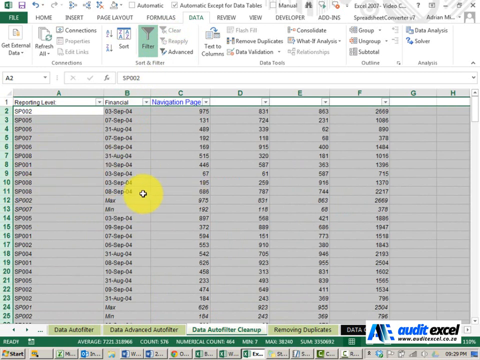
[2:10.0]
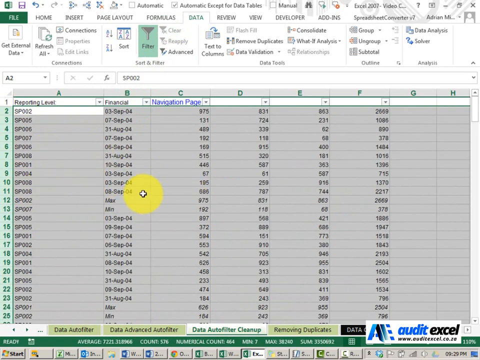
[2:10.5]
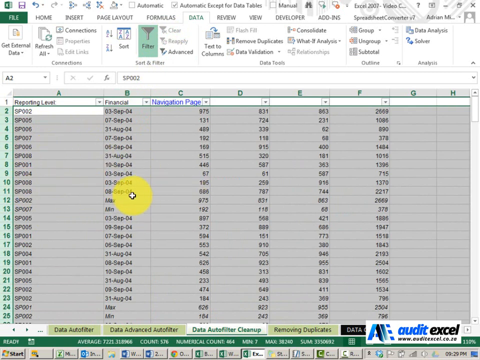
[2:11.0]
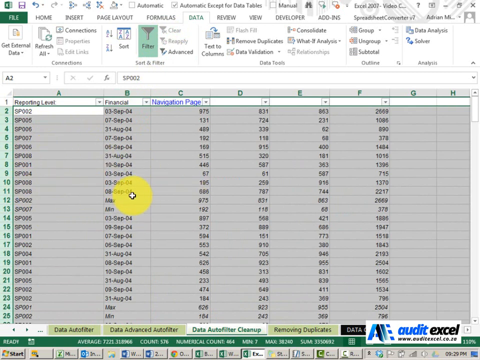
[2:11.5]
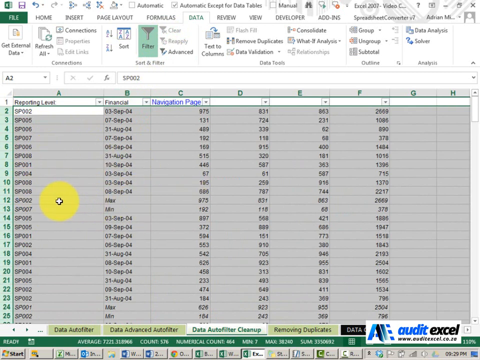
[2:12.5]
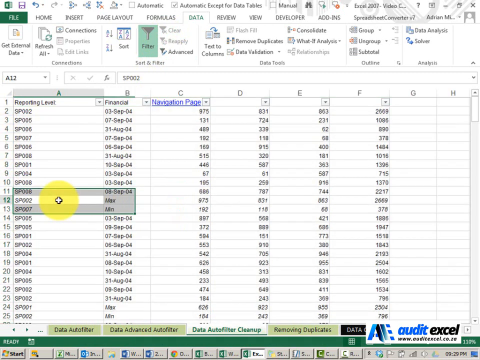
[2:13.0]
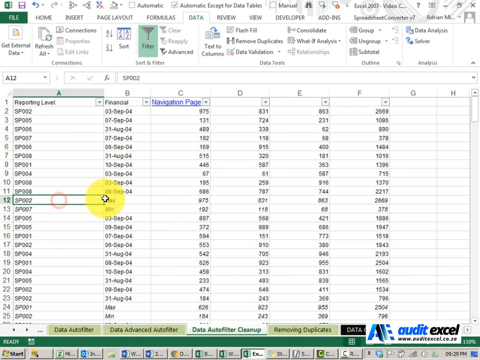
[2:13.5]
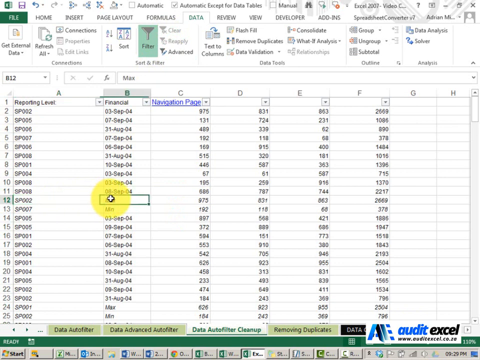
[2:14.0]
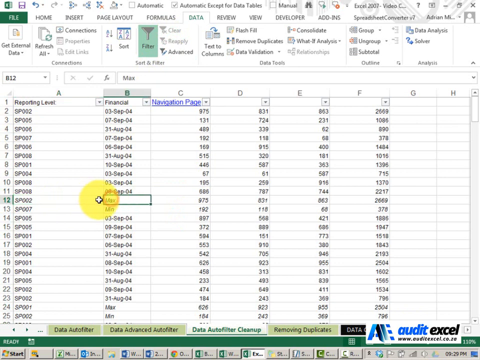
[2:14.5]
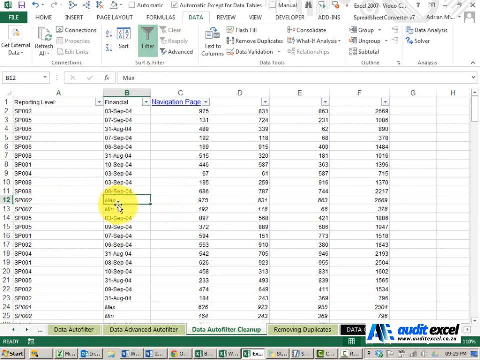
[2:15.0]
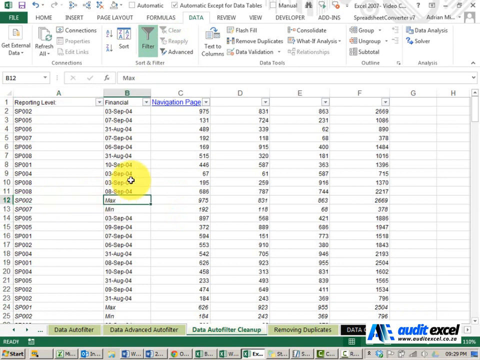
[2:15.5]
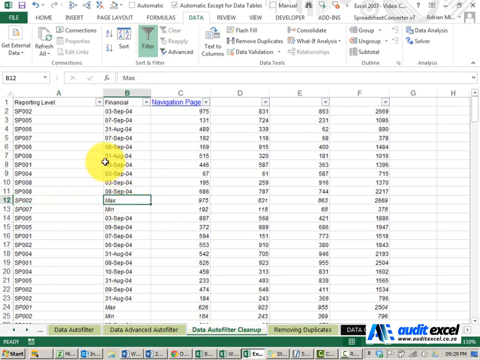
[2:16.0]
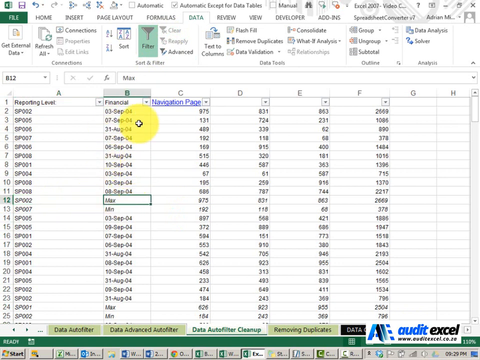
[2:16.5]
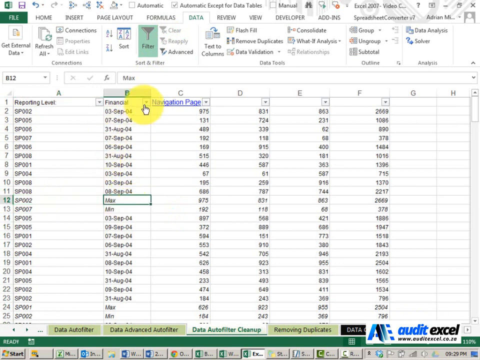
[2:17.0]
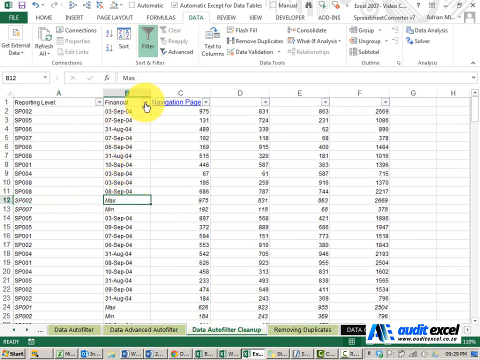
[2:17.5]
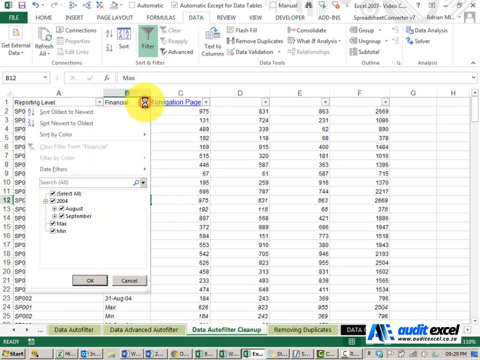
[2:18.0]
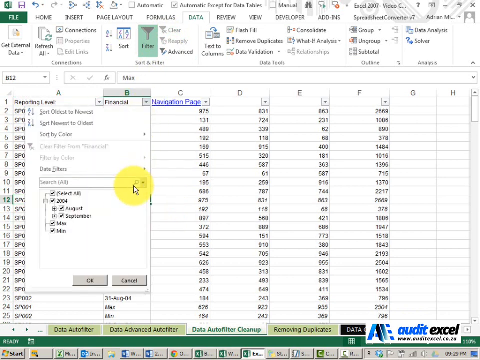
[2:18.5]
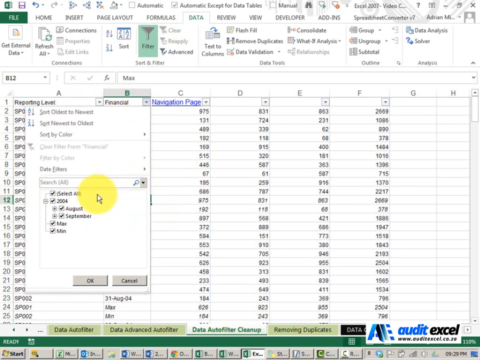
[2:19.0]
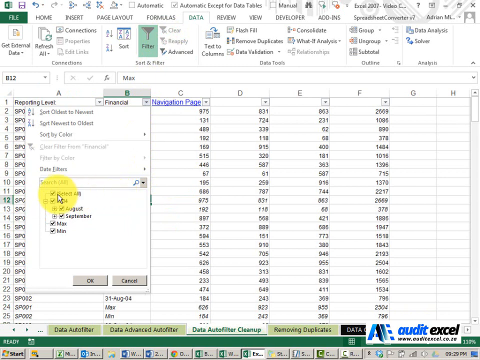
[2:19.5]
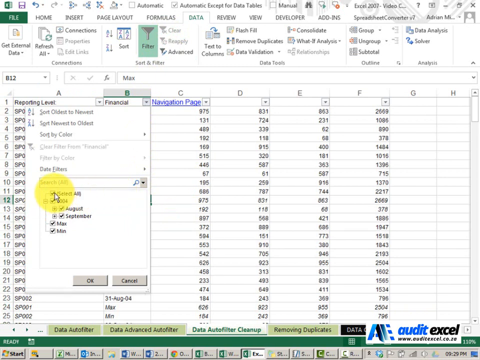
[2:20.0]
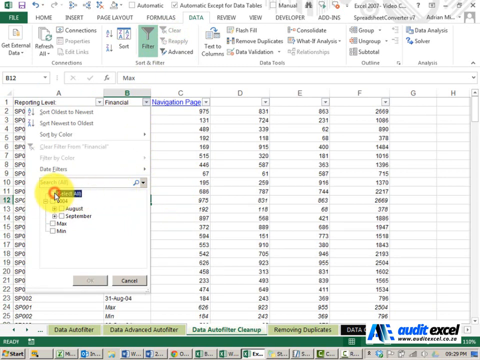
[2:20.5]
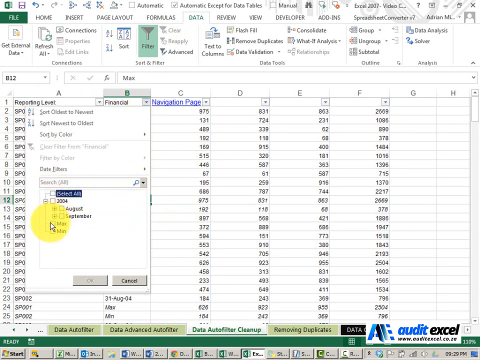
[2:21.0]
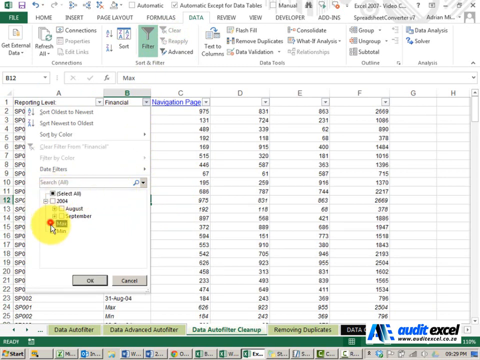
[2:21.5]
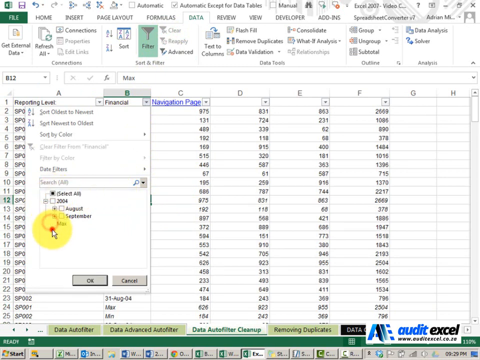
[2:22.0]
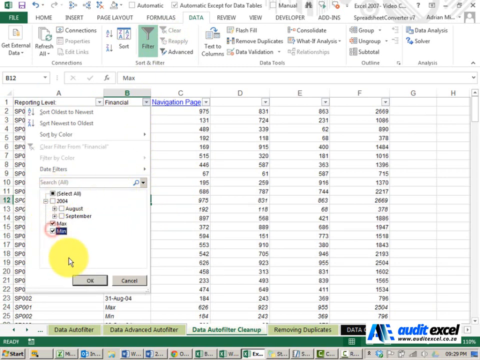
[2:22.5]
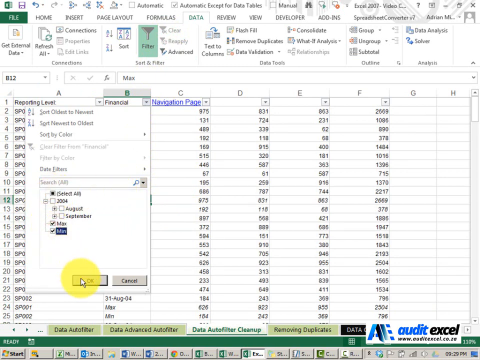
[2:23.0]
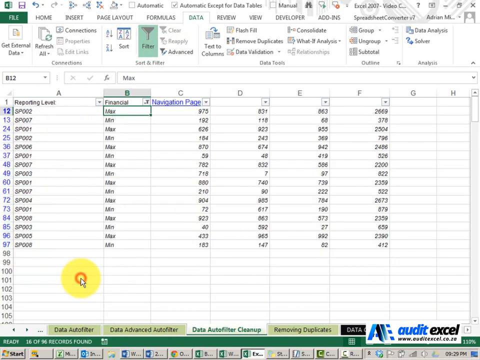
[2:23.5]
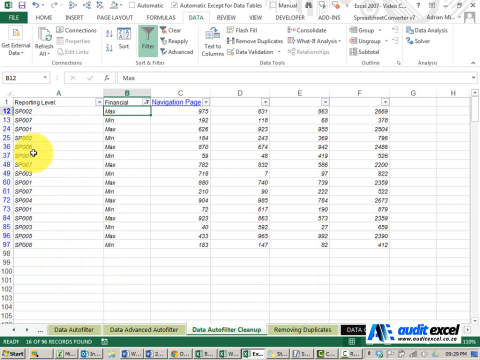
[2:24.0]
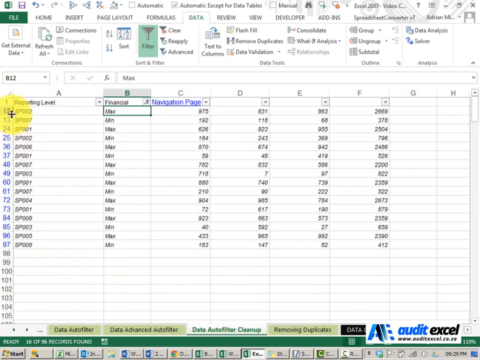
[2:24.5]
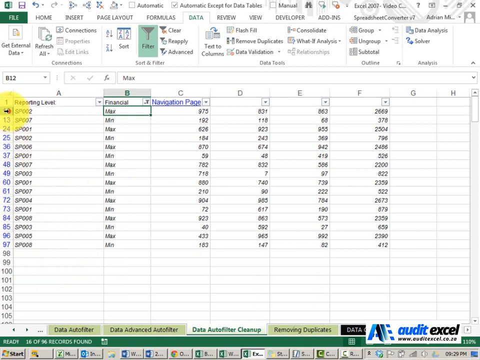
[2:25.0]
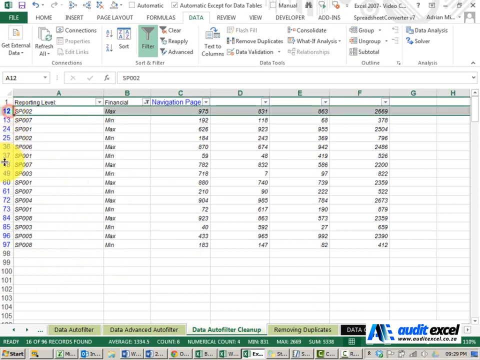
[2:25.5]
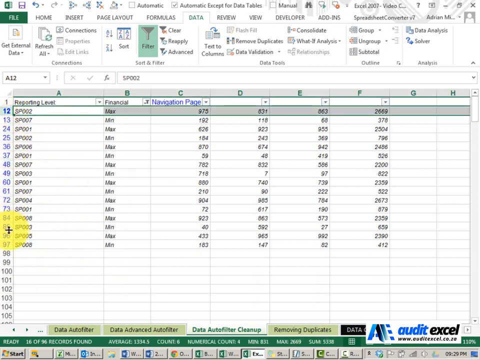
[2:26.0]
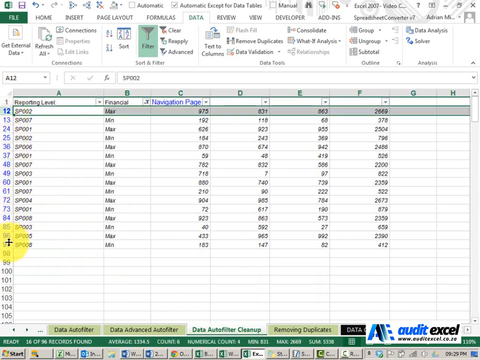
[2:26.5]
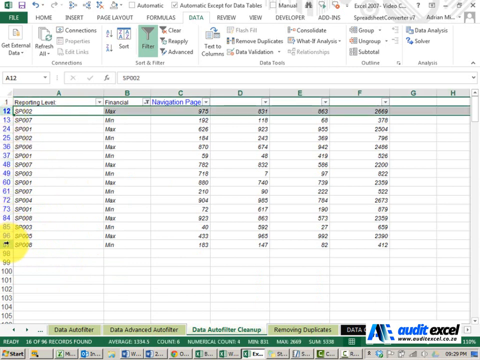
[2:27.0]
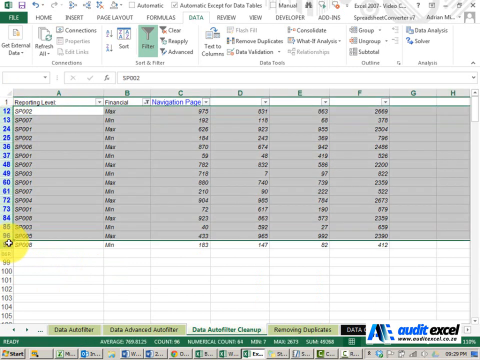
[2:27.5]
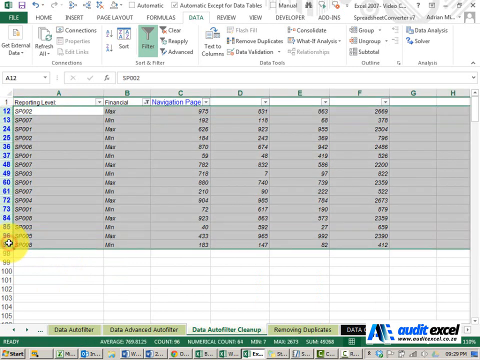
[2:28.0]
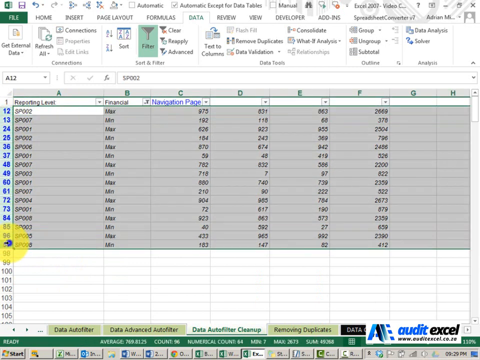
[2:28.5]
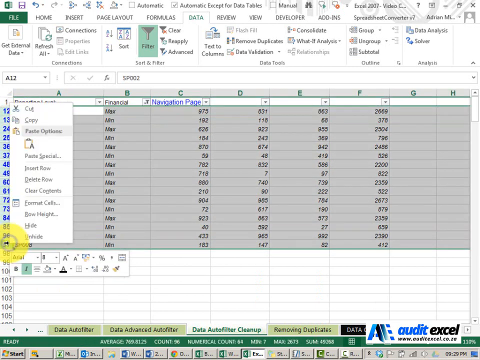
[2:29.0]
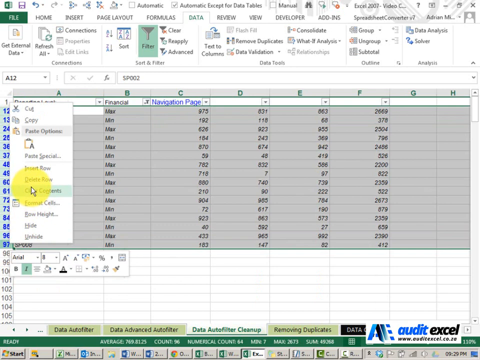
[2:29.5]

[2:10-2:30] The sheet now shows each salesperson with an individual number, which products they sold, and different dates; the data appears to cover a two-month period. A column called financial is highlighted, everything is deselected, and then max and minimum are selected, giving the maximum and minimum number of sales for each employee. Then a delete is done. This seems to show the period of each employee's maximum sales.